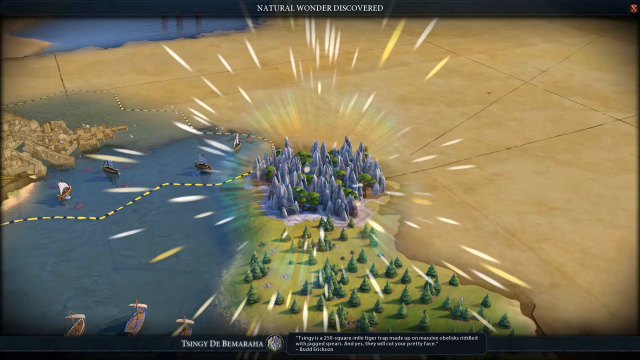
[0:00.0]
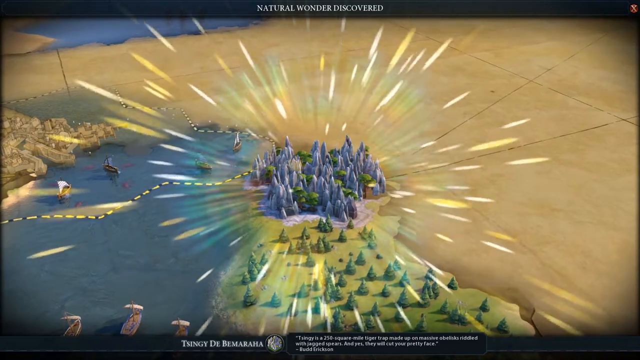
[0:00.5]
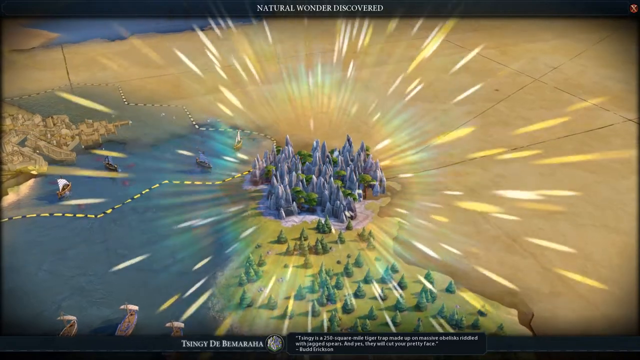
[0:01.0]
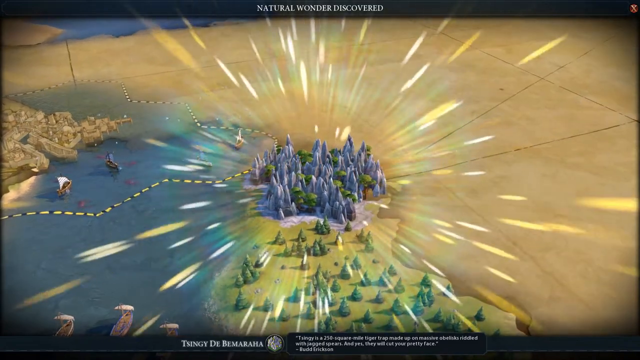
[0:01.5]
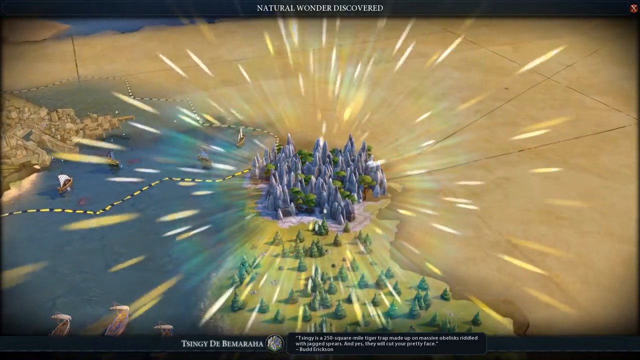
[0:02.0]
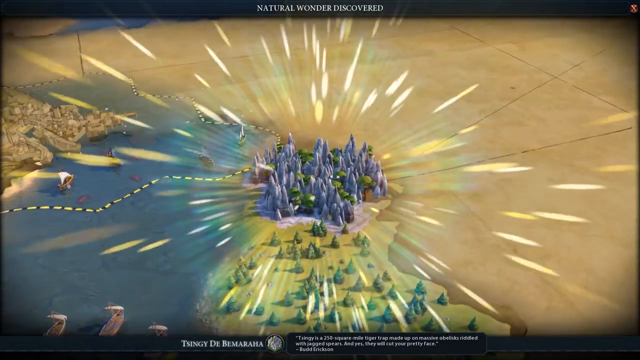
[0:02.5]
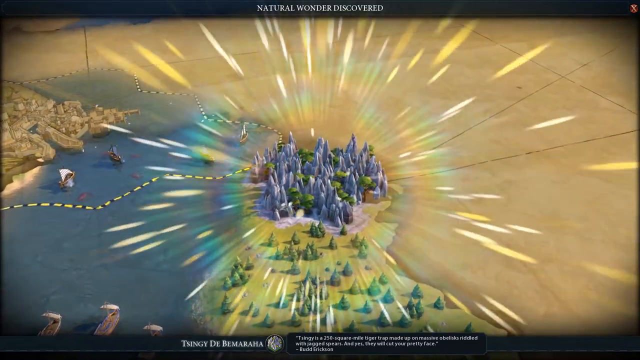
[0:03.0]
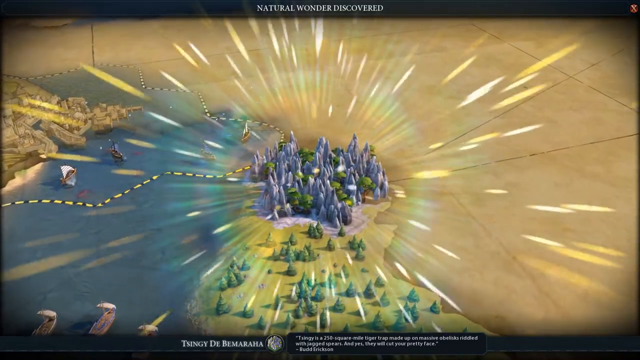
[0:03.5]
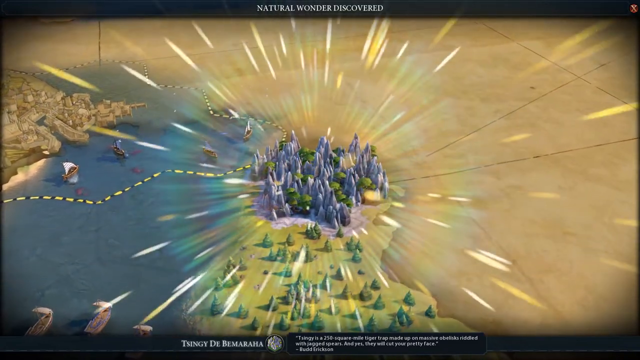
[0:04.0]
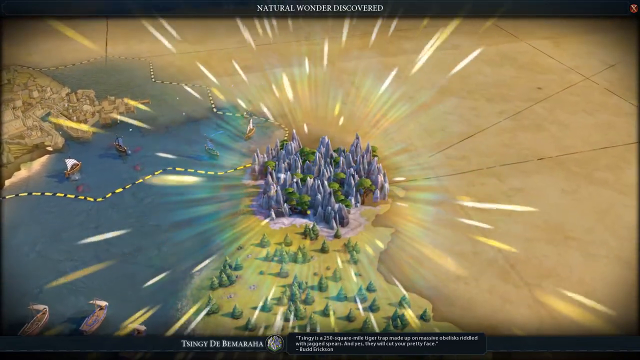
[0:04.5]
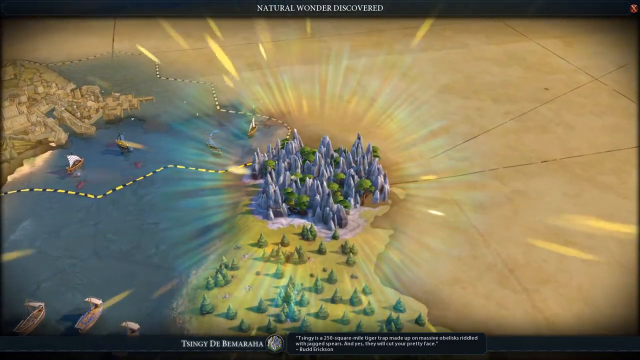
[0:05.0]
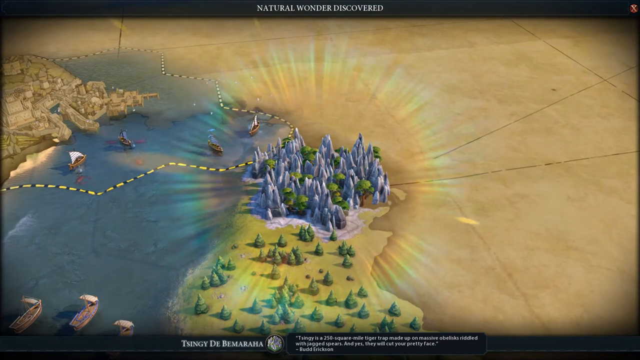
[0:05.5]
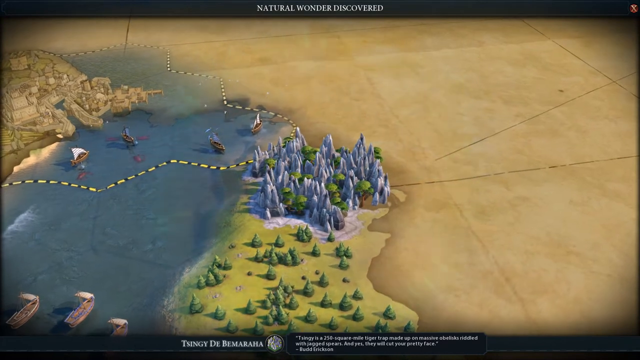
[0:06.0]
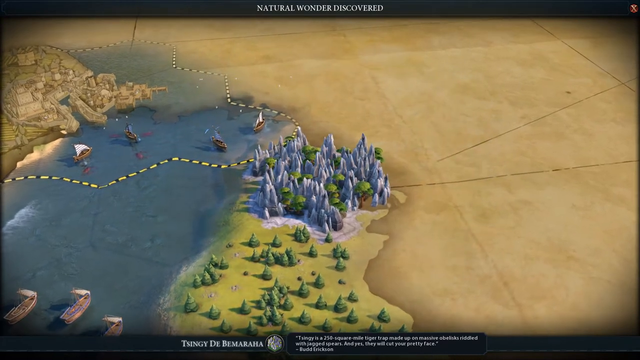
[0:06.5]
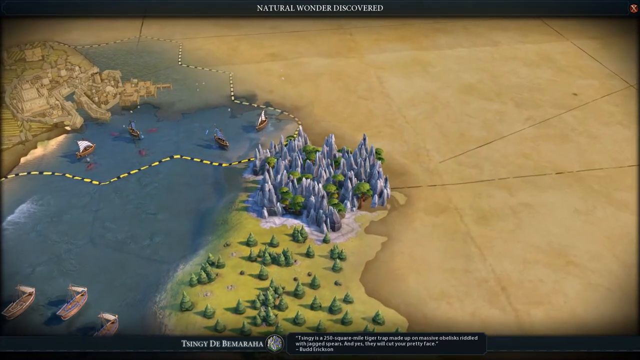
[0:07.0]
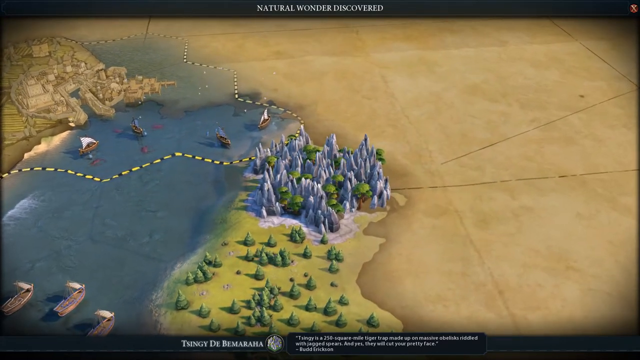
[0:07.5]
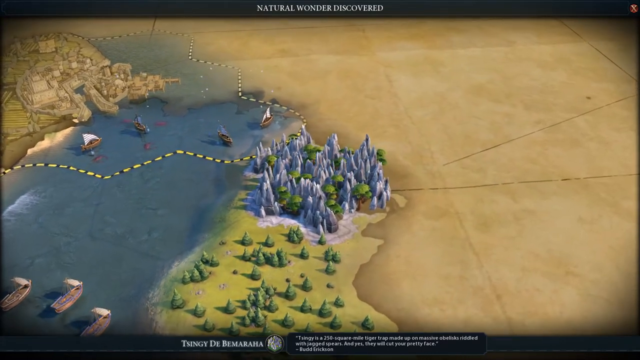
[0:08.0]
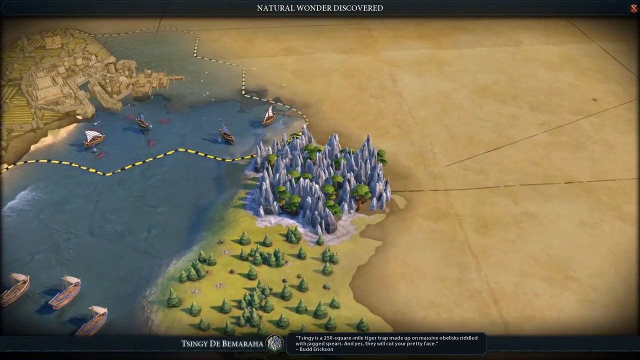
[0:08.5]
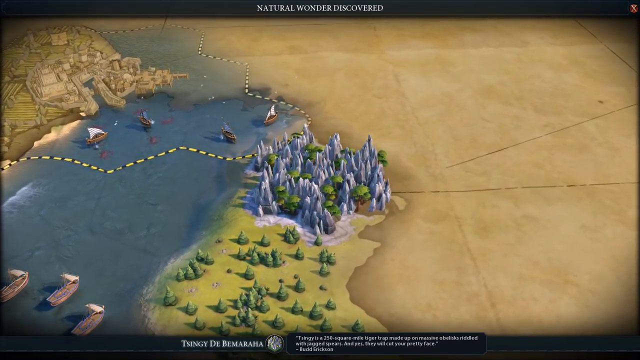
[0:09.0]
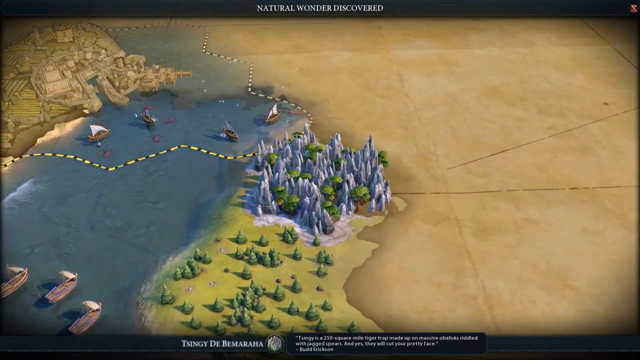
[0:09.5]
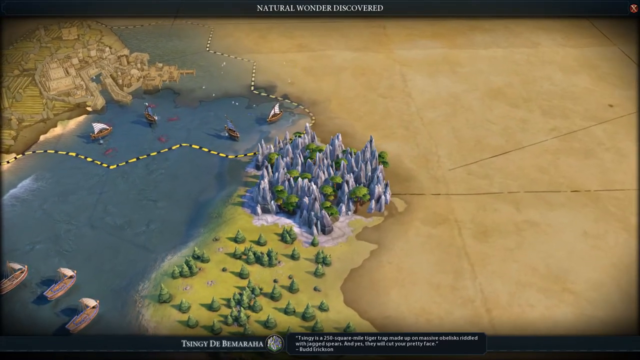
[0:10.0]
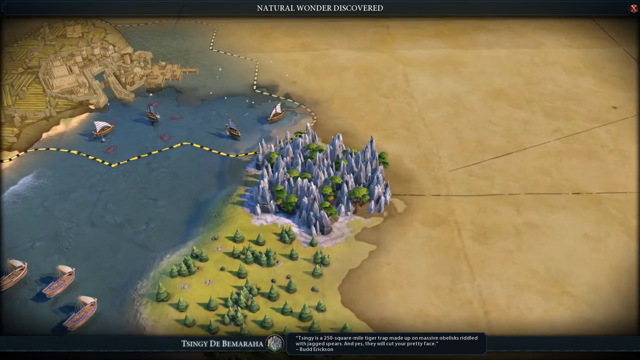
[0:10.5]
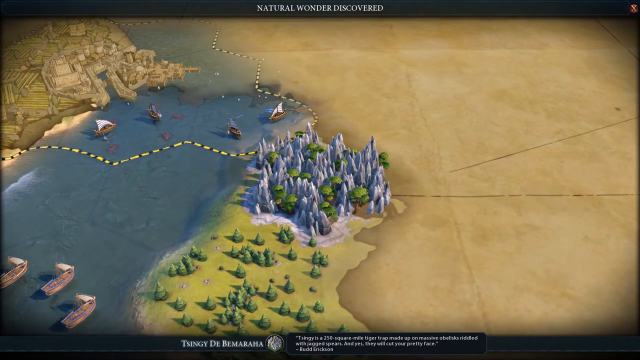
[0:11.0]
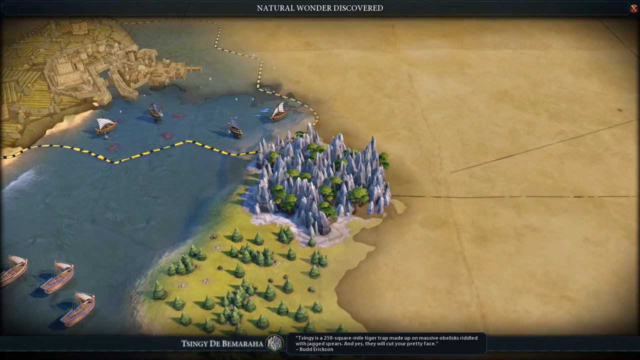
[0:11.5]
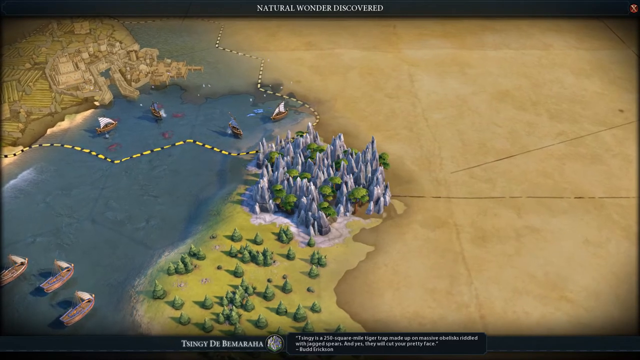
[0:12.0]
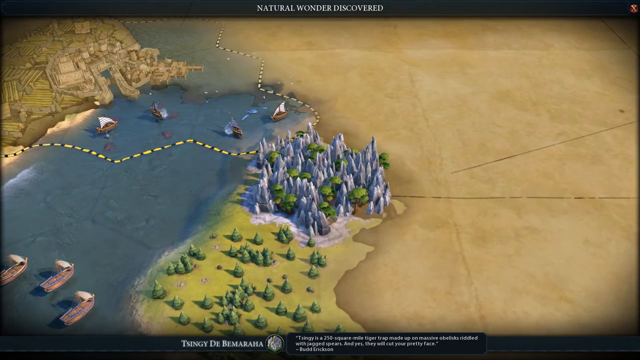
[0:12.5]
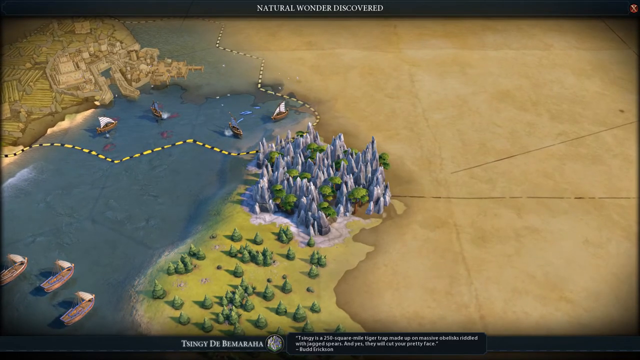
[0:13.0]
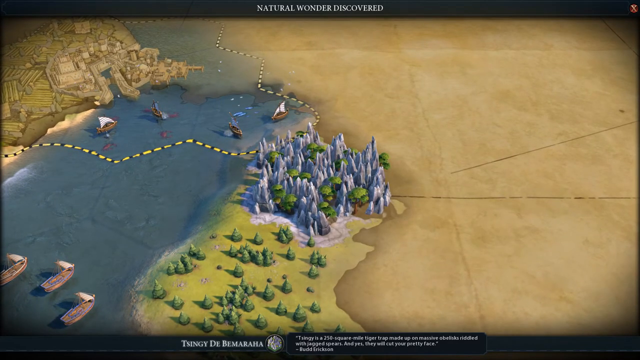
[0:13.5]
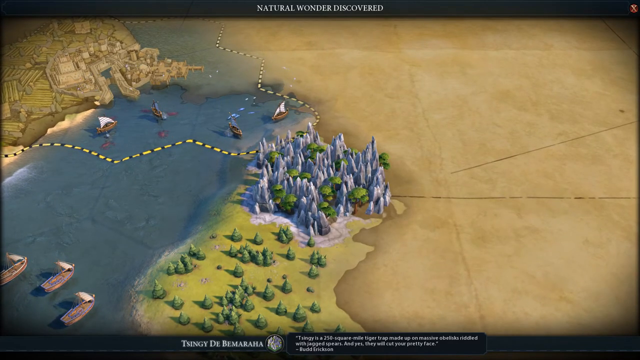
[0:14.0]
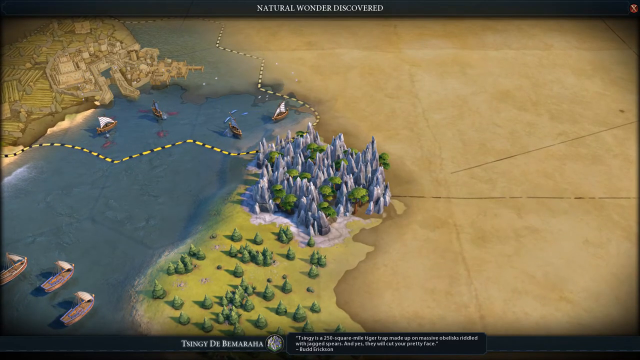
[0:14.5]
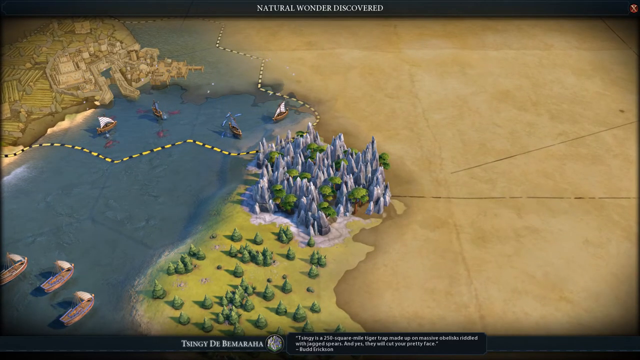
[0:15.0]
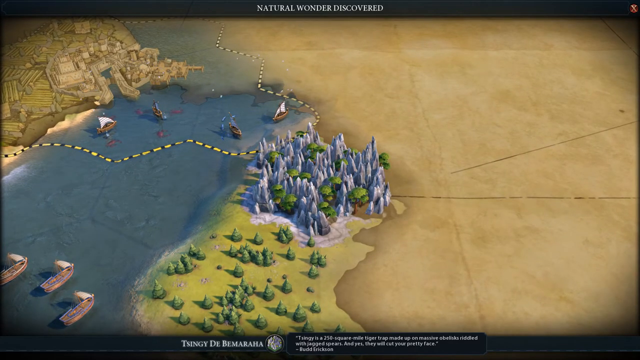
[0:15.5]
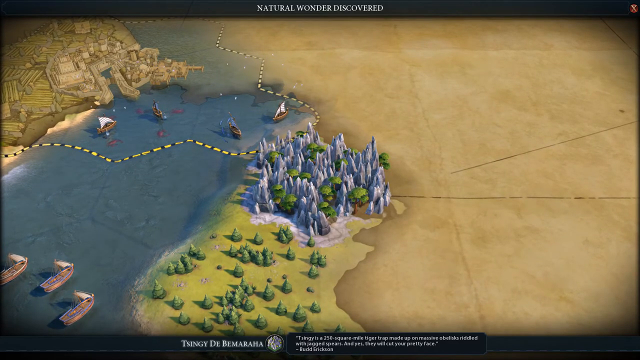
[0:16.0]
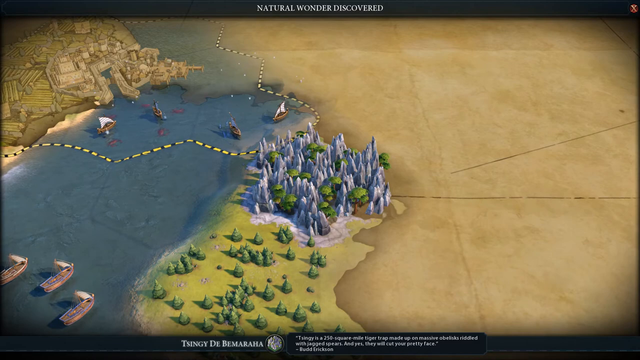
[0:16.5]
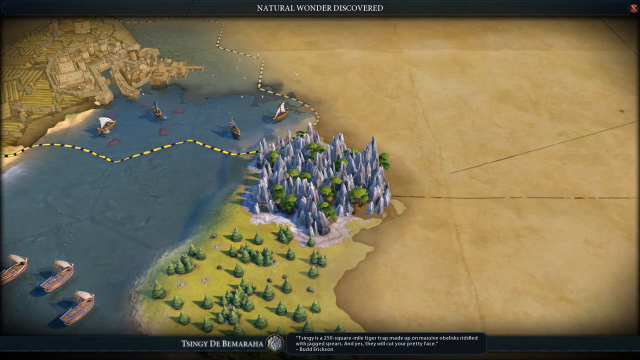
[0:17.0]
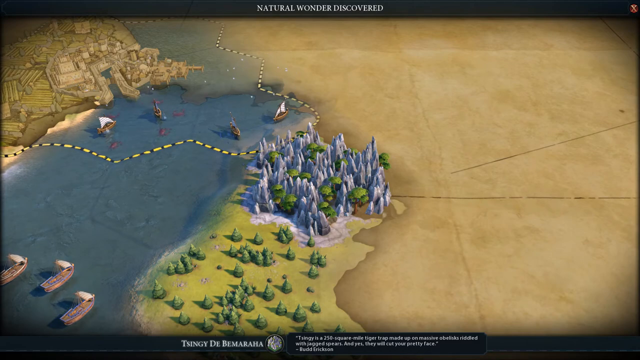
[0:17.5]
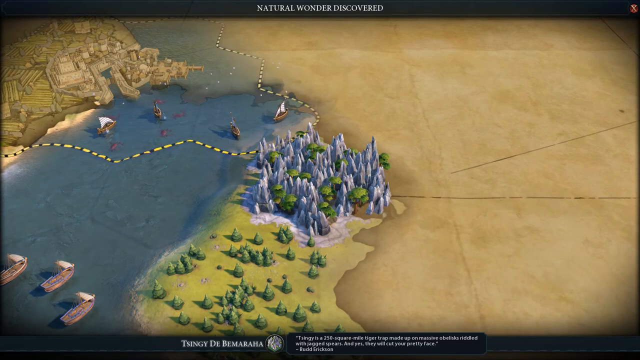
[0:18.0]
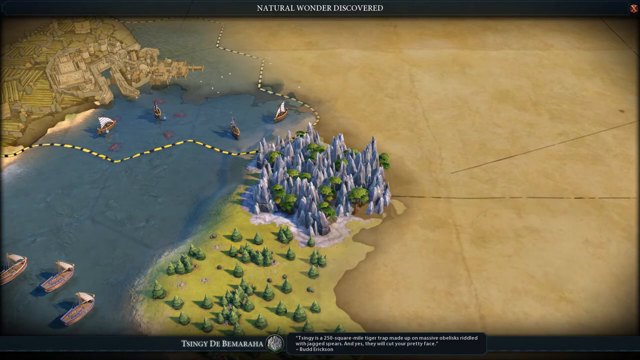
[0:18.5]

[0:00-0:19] What looks like a strategy game appears on screen, apparently Civilization, likely a PC game and possibly Civilization VII. At the top the text reads "Natural wonder discovered," with some smaller text below it that is illegible at this resolution. The unrevealed parts of the map look like parchment paper that a map would be drawn on, while the revealed hexes show trees, boats and water. A small, complex city is in the upper left corner. The focus is a group of very tall, pointy mountains with trees within them, which is the natural wonder that has been discovered. The camera pans around as a number of energy-like lines shine out of the natural wonder. Some sea infrastructure has been built along the coastline, and boats of different types, not caravels, are sort of scrambling around.